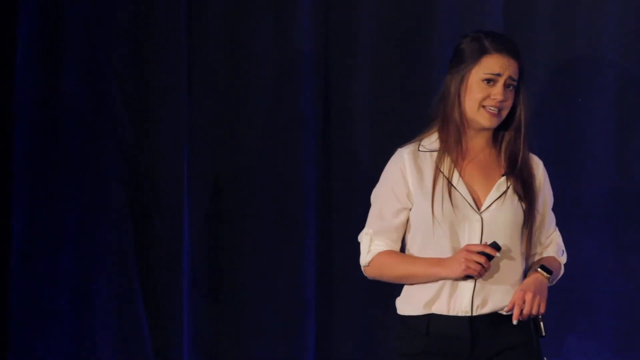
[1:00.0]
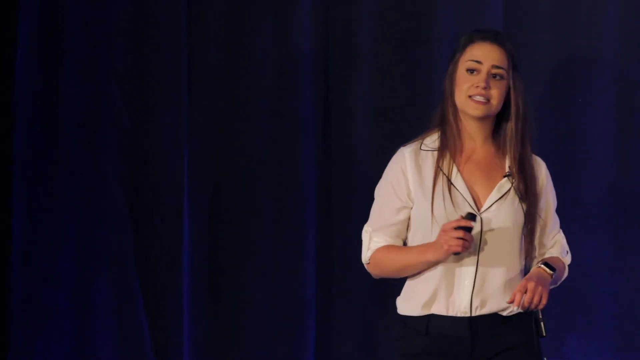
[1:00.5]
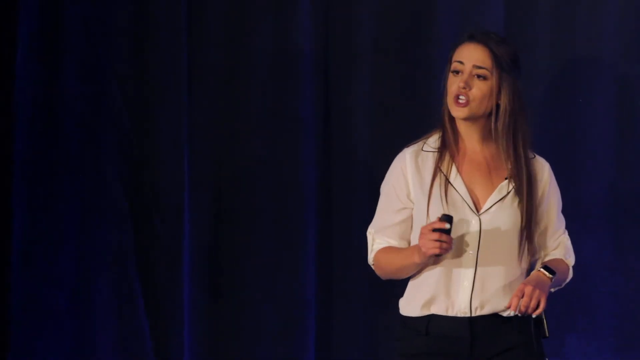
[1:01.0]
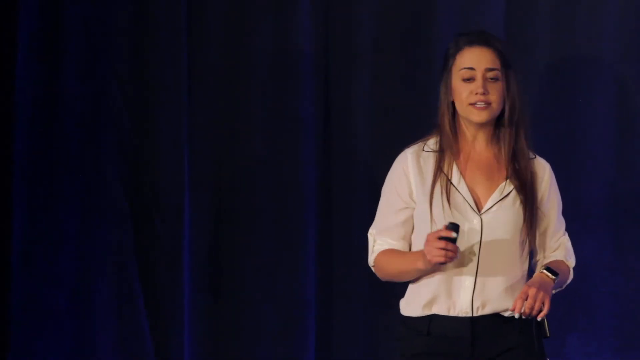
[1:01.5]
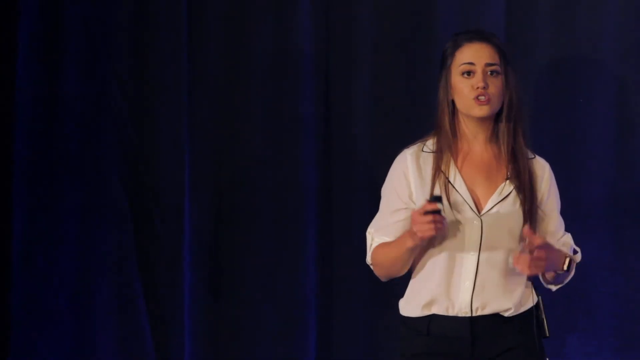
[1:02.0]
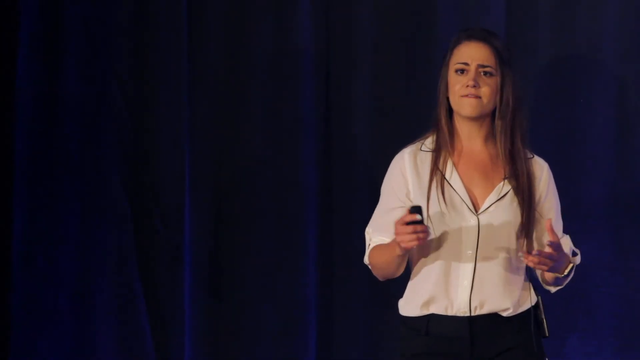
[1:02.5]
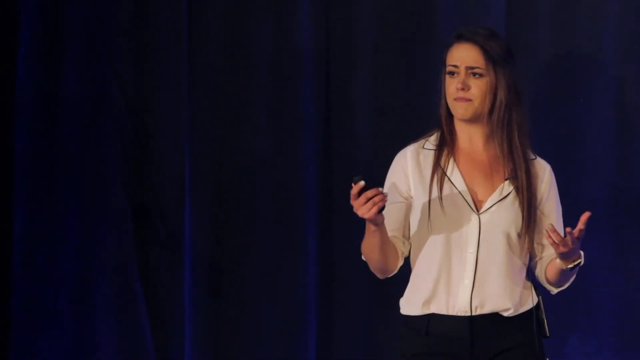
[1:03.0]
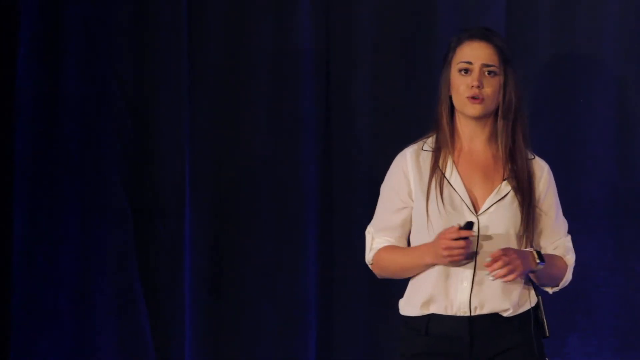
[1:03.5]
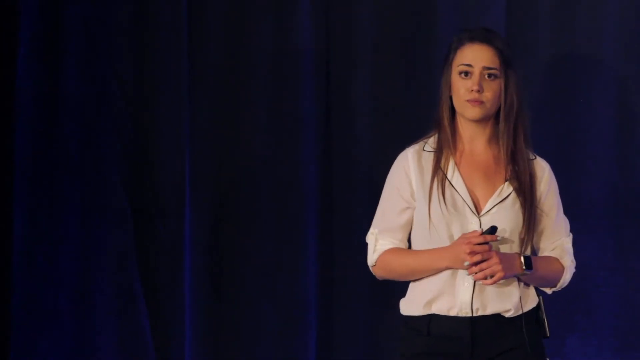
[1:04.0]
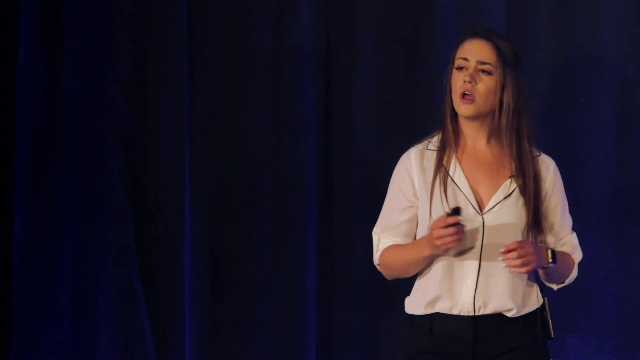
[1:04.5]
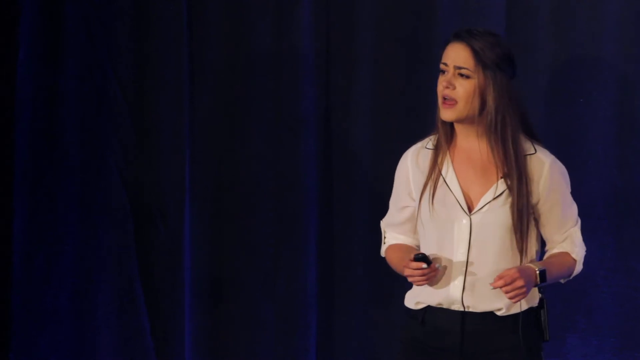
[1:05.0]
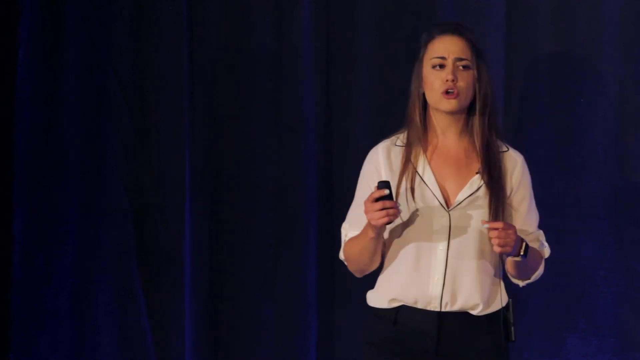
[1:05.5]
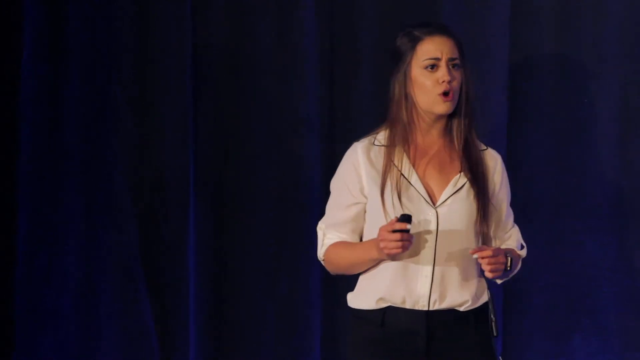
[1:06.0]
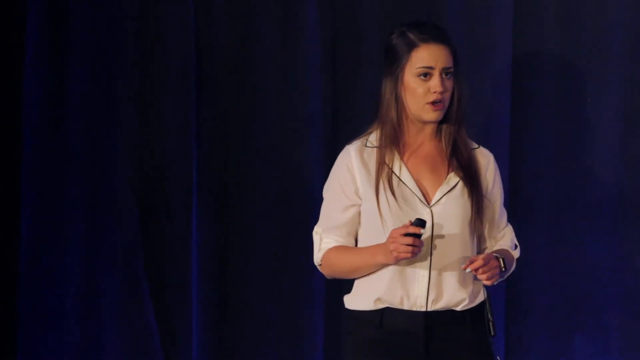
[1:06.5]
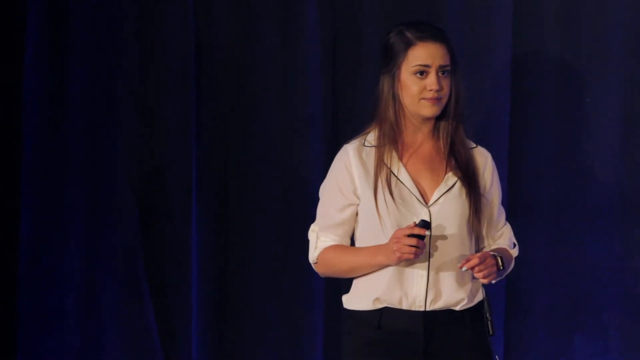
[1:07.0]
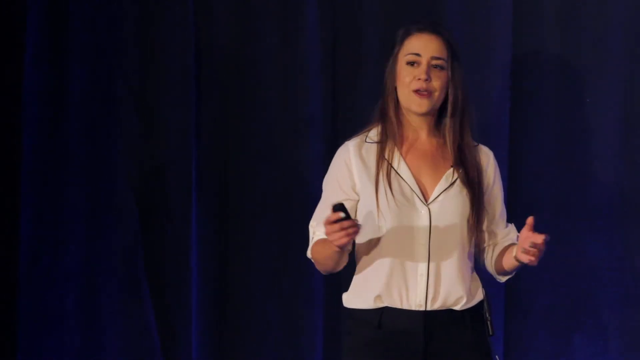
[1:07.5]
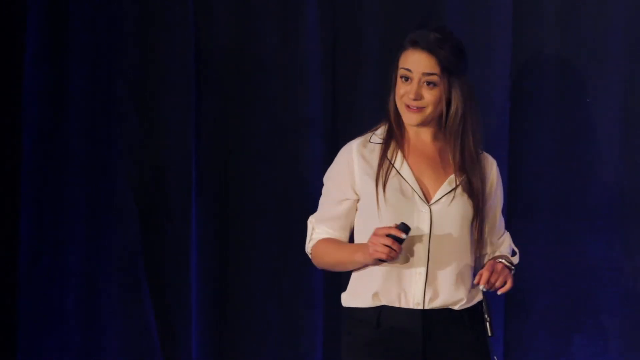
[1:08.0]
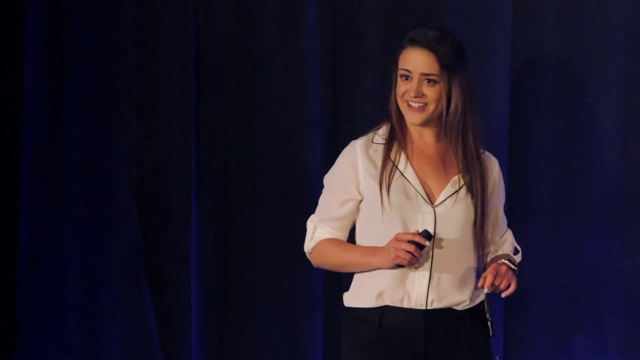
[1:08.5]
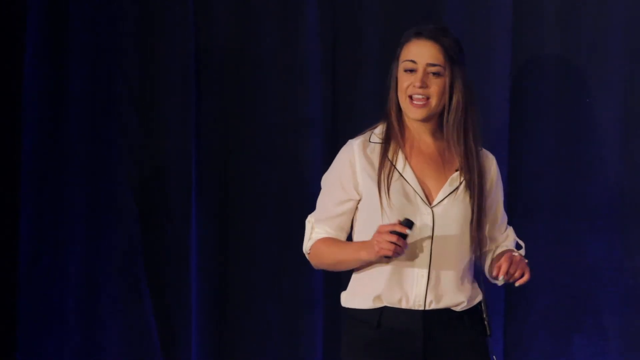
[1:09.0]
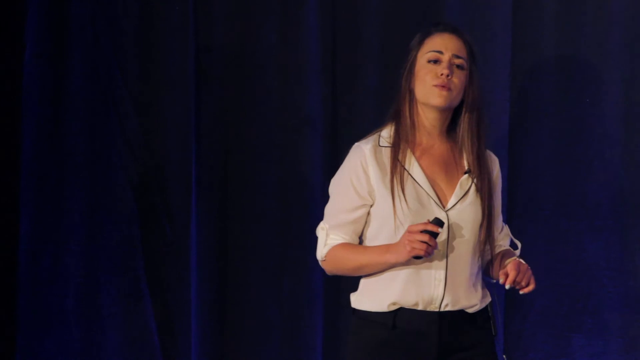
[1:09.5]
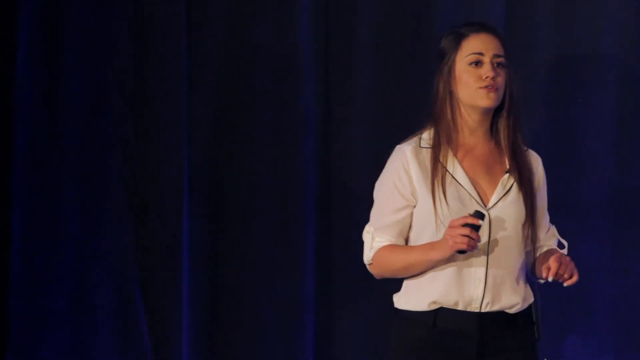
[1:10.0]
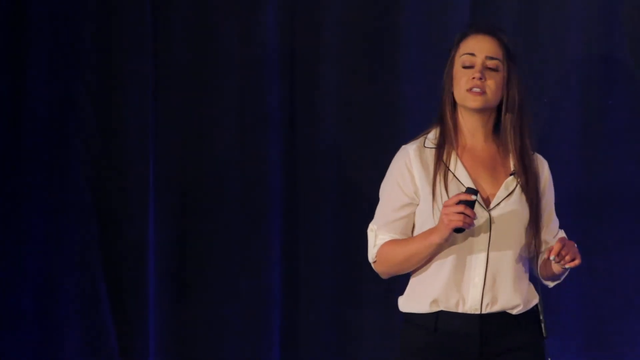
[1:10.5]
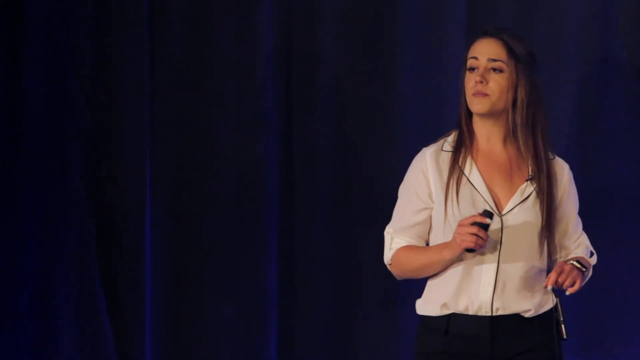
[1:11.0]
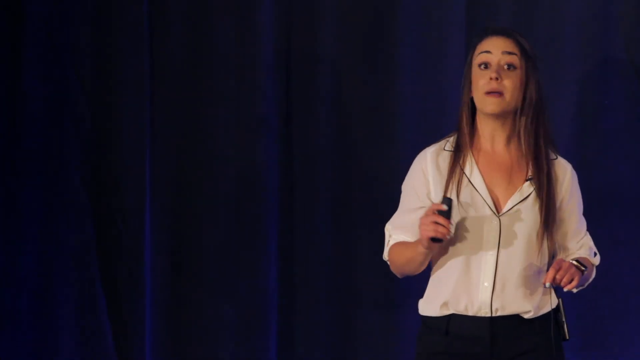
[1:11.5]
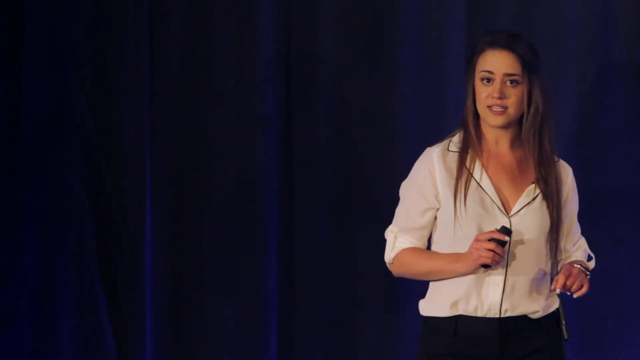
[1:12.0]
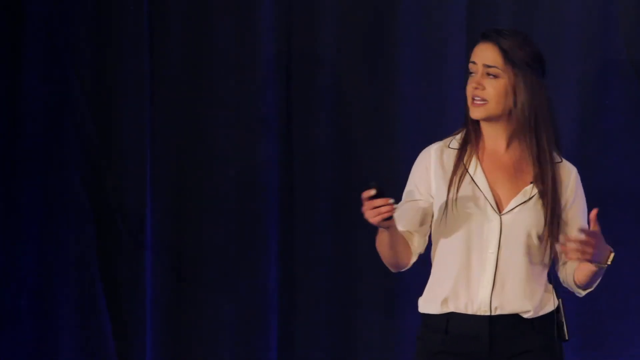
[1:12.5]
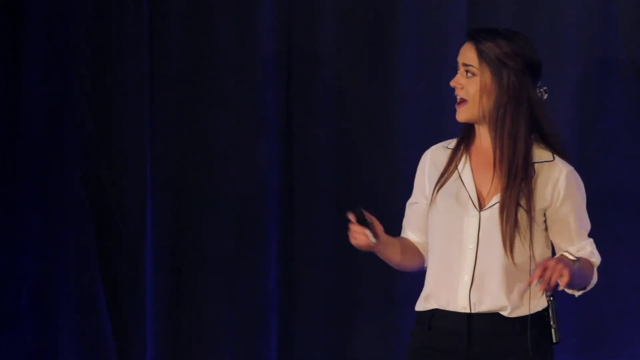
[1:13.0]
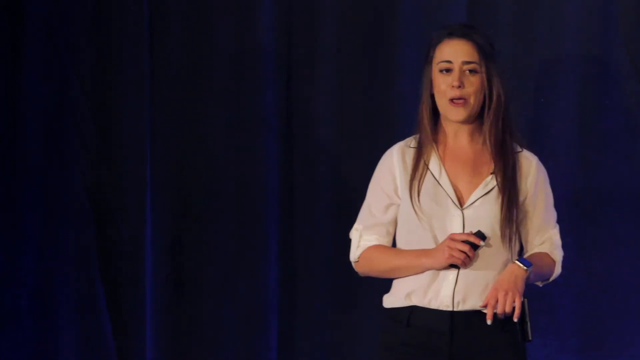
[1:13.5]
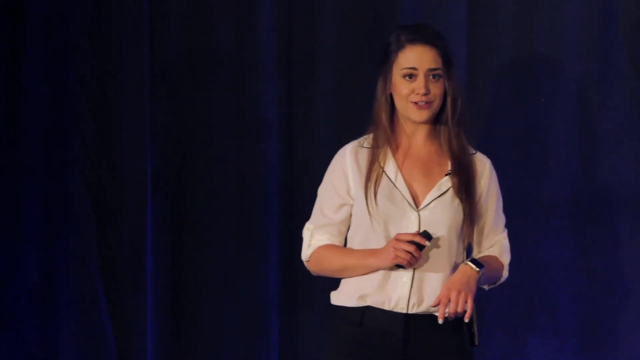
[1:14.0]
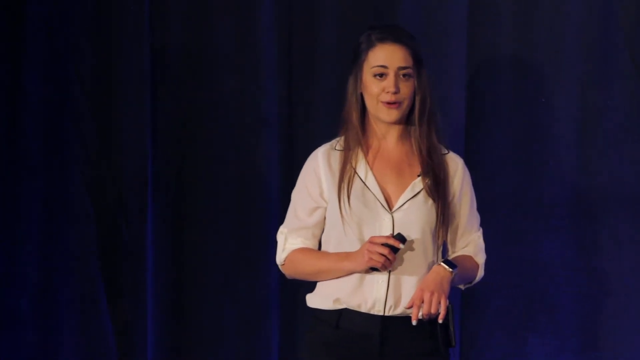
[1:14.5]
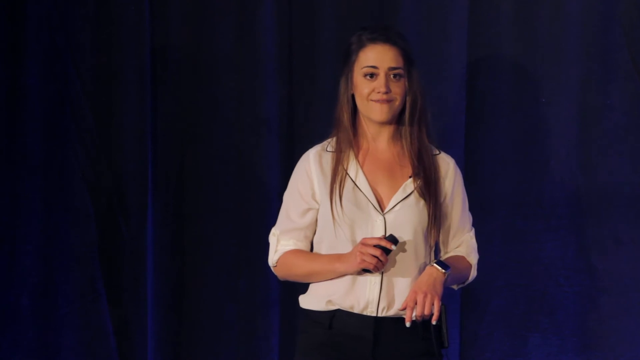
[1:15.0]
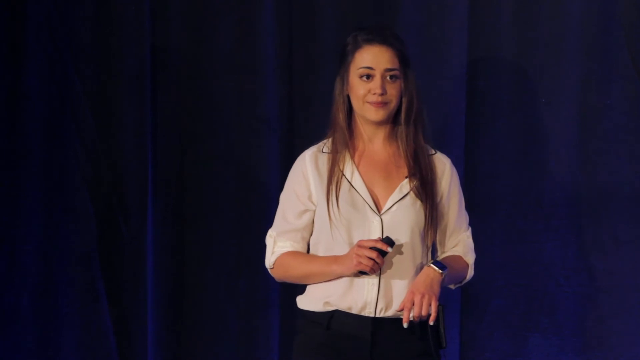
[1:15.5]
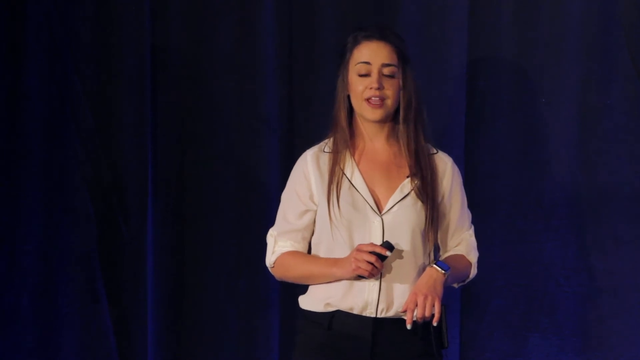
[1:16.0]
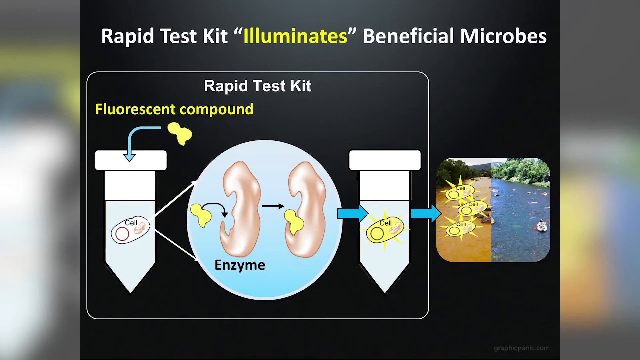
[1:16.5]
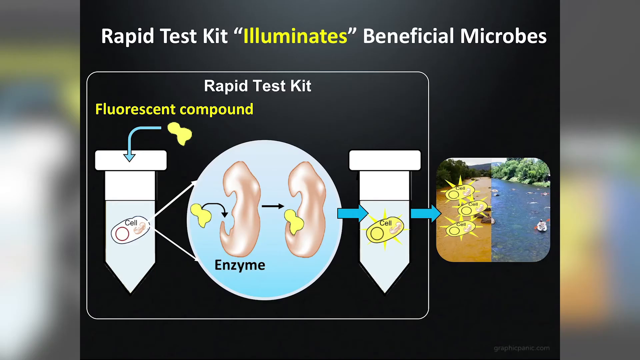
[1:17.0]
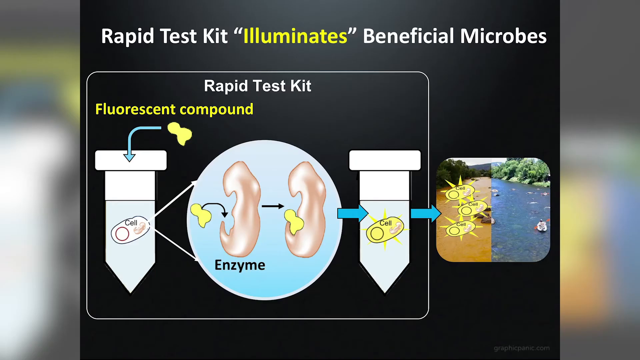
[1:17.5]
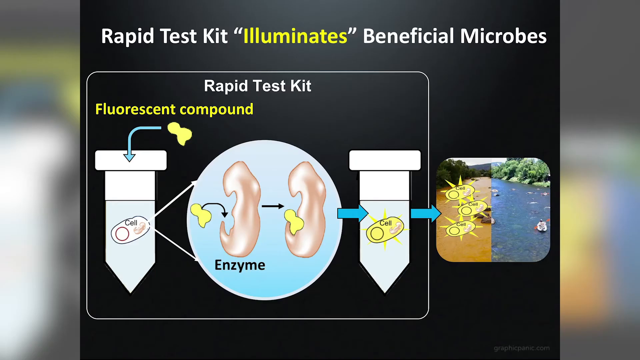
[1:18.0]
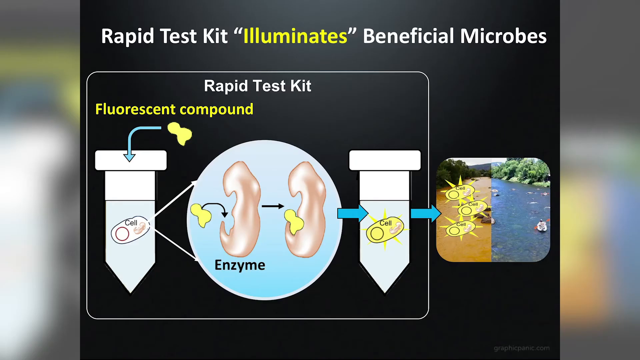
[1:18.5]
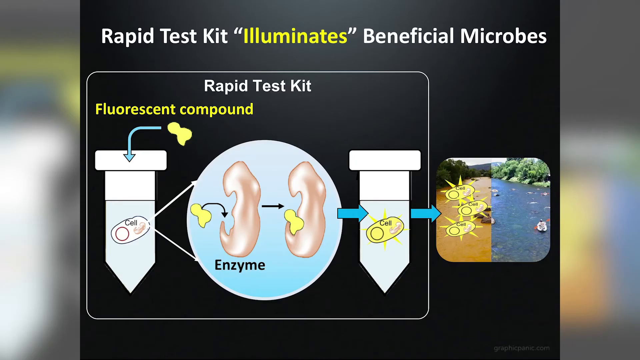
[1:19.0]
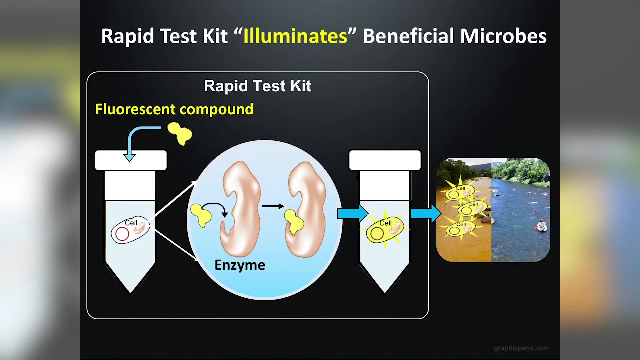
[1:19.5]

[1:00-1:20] Footage that looks like a TED Talk shows a young woman toward the right of the screen, apparently in her 30s, in a white dress shirt with some black accents, black slacks and a smartwatch, holding a clicker in her other hand. She speaks very animatedly to the audience, moving her hands back and forth and moving her head; her body language seems very passionate. She keeps bringing her hands away and putting them back together. A blue curtain is visible behind her. She remains the focal point as she speaks, and at one point looks off to the side. Another slide comes up on the projector: a black background with various graphics and what looks like white and yellow text reading "rapid test kit illuminates beneficial microbes." Below is a white box outline with the text "rapid test kit fluorescent compound," tube-like shapes with cell drawings in them, and between the two tubes the word "enzyme" with tan and yellow blobby shapes beside black arrows. A series of blue arrows points to a real photograph overlaid with cartoon images: on the left, dirty, murky water with cartoon yellow cells laid over it; on the right, clean, serene-looking water with somebody canoeing or paddling in a boat. It appears to be a before and after.